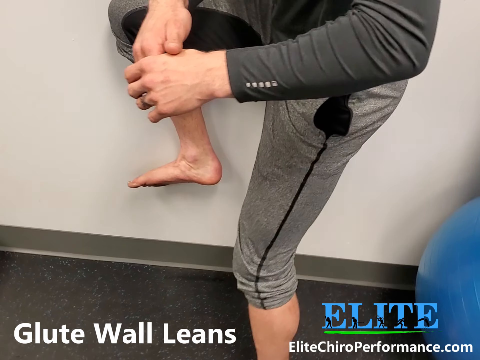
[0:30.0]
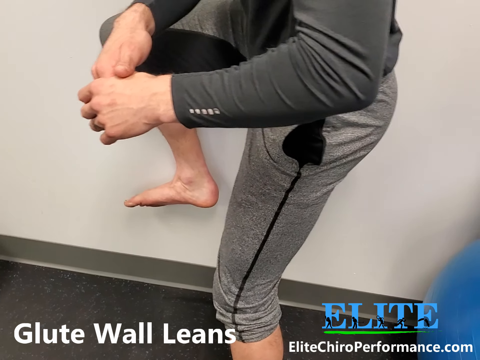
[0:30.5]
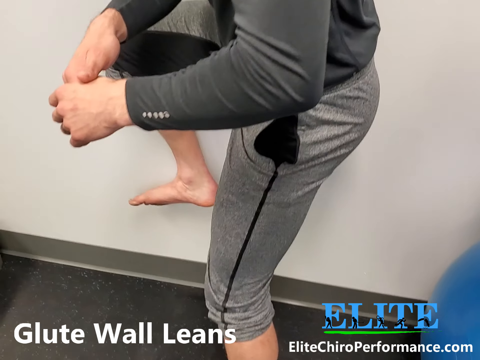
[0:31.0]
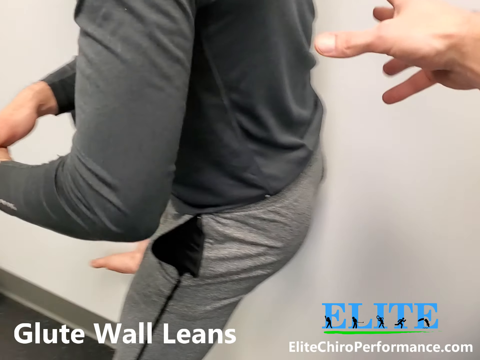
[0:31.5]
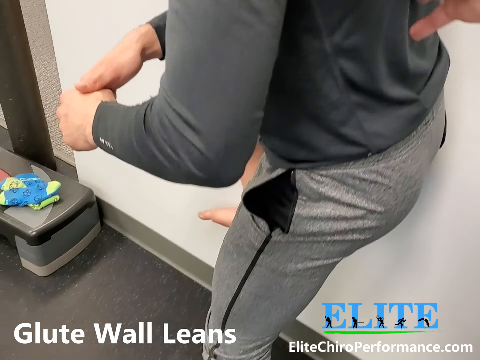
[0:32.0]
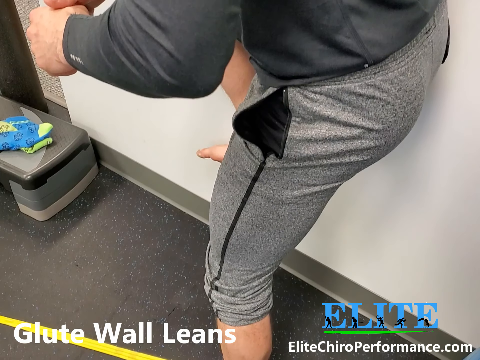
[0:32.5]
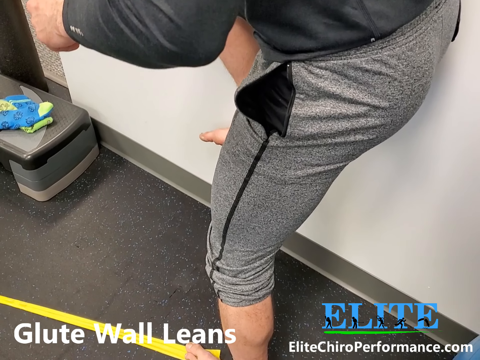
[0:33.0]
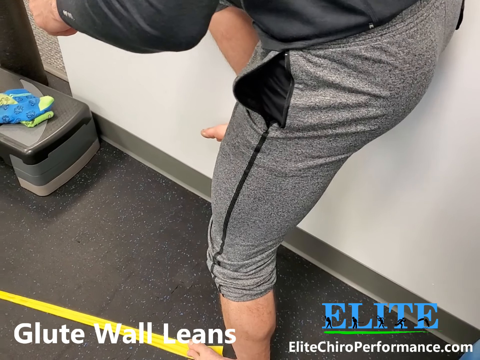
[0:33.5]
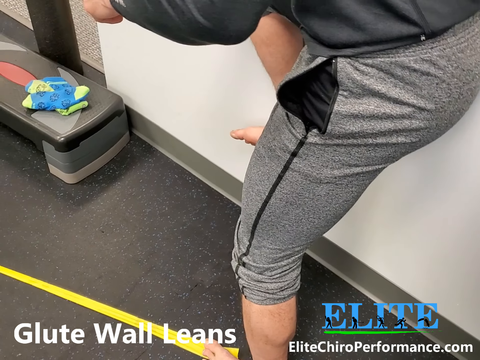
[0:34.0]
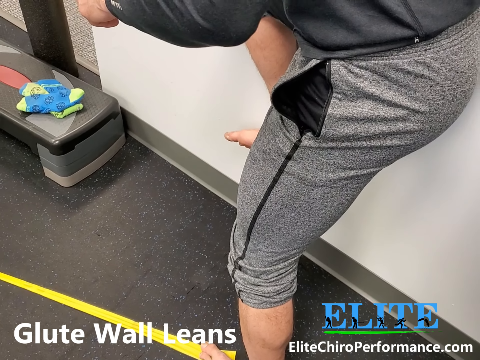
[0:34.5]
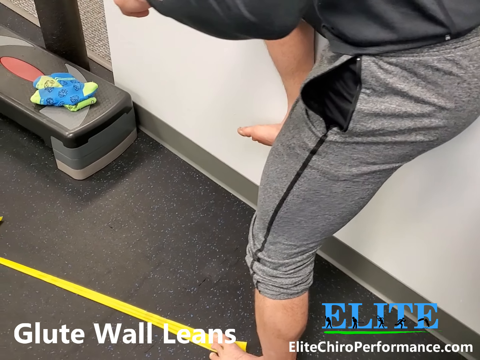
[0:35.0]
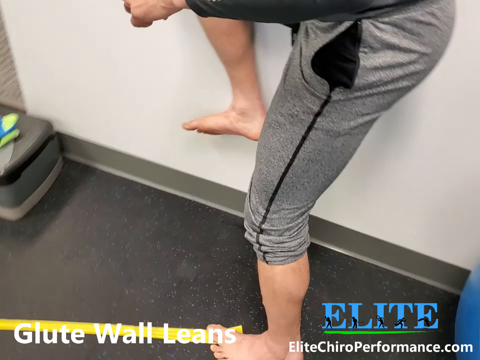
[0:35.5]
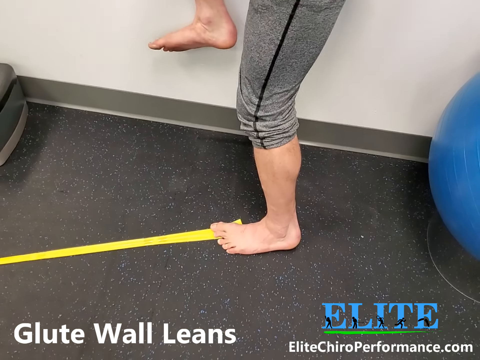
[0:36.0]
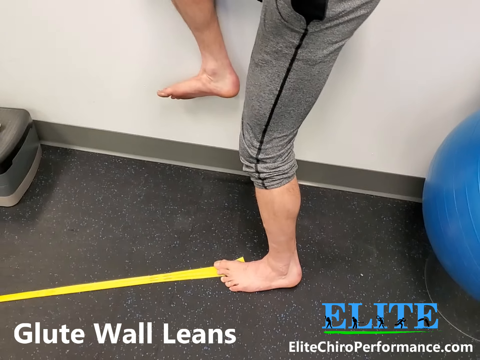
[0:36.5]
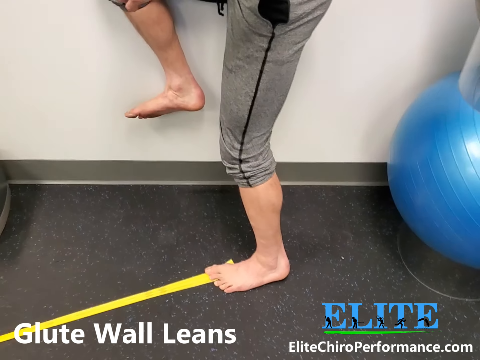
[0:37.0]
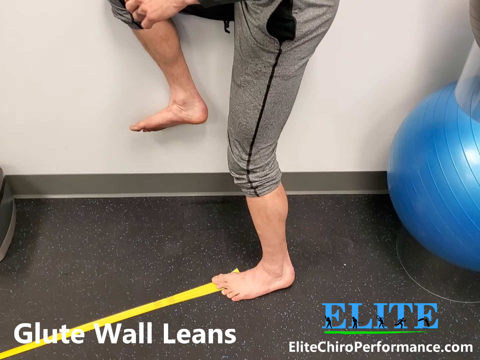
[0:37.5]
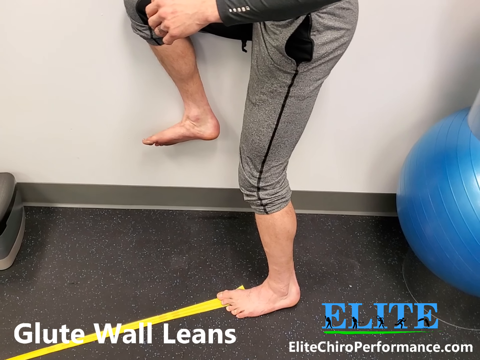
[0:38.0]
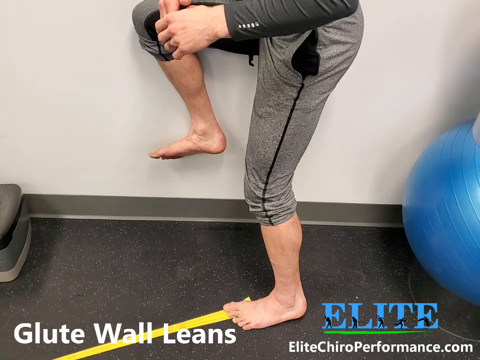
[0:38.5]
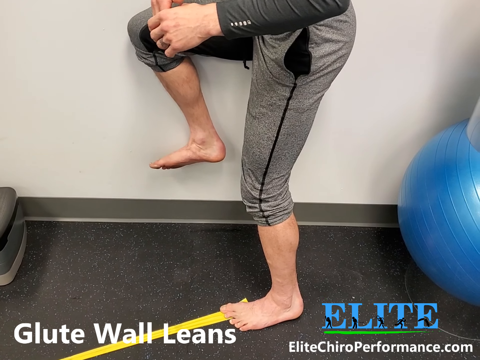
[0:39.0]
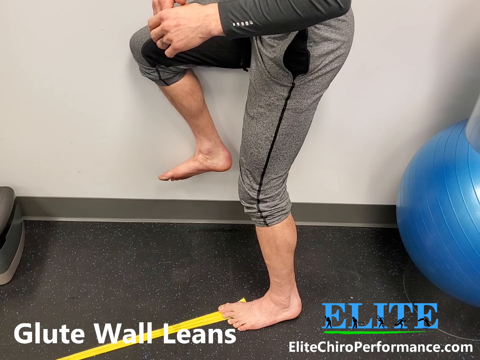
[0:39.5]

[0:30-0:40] A person seen from about the waist down is kind of leaning against a wall with their right leg, which is against the wall, and their foot touches the wall maybe about a foot or so above the ground. They appear to be in a kind of exercise room, with a ball in the bottom right and a black floor at the bottom. They wear exercise clothes: gray sweatpants and a gray long-sleeve shirt. The camera kind of moves behind the person, and a hand in the top right corner of the frame kind of touches the person's back. The camera kind of zooms down, showing more of the person's left leg, then moves a little to show the person's left foot sort of touching a yellow tape on the ground. The person then starts to move their right leg a little bit down the wall.